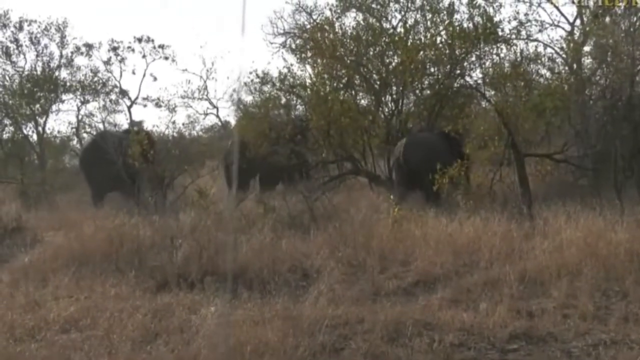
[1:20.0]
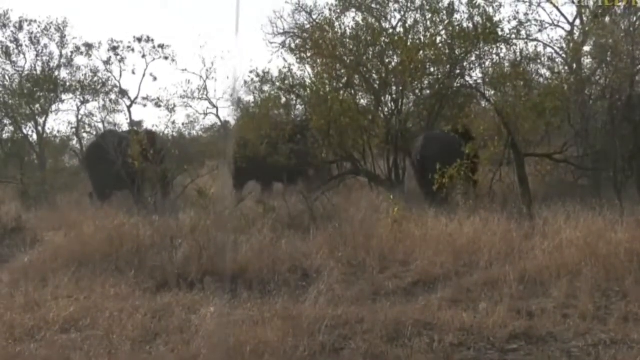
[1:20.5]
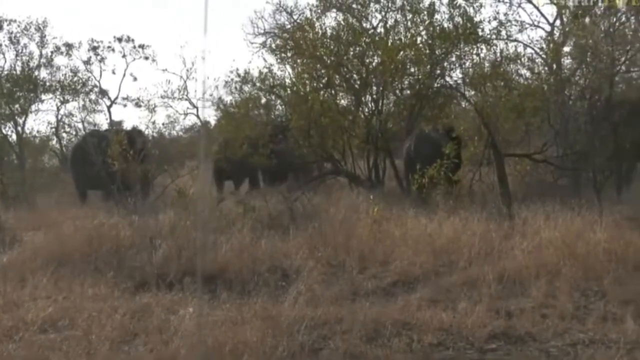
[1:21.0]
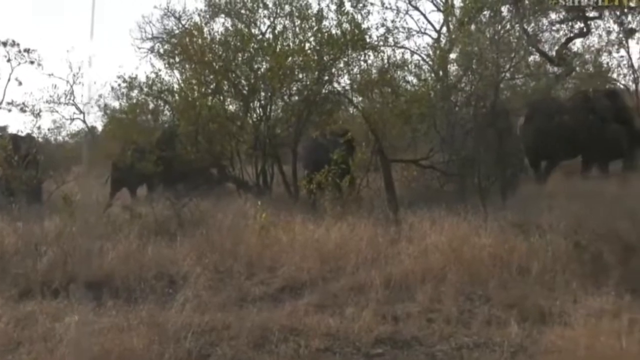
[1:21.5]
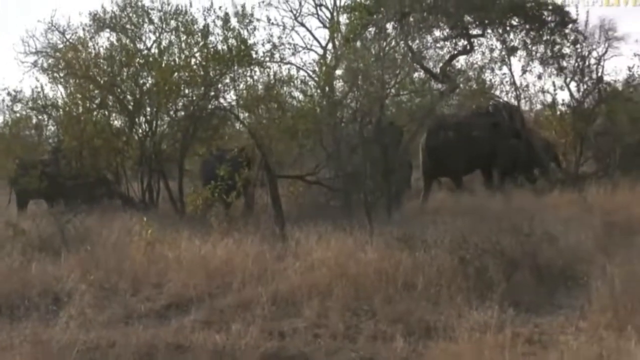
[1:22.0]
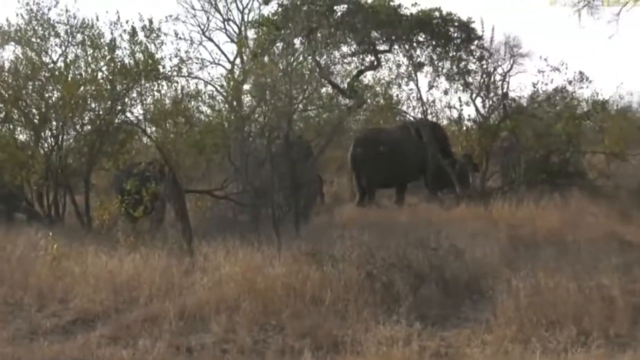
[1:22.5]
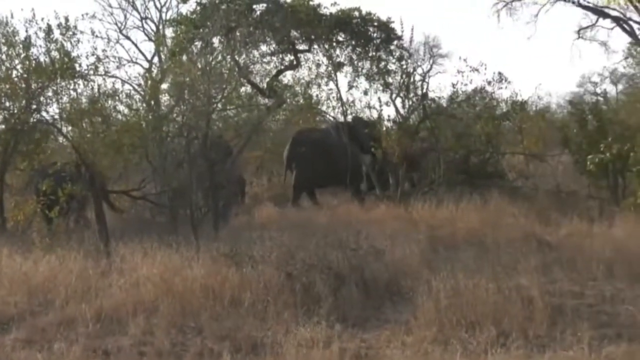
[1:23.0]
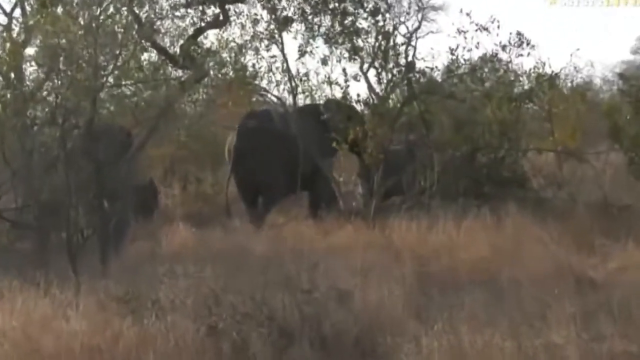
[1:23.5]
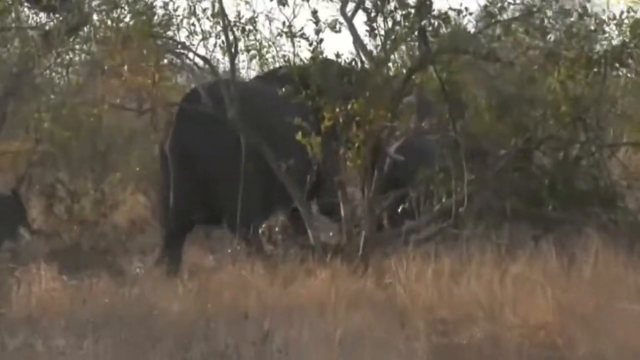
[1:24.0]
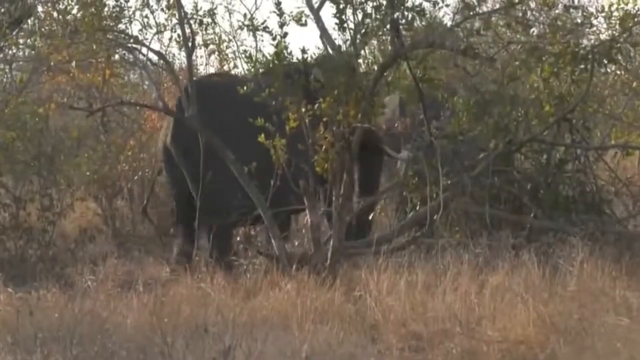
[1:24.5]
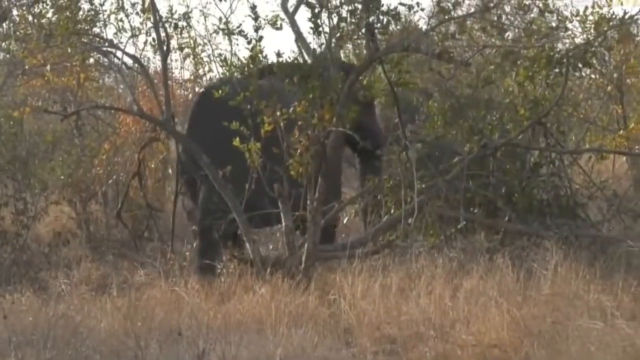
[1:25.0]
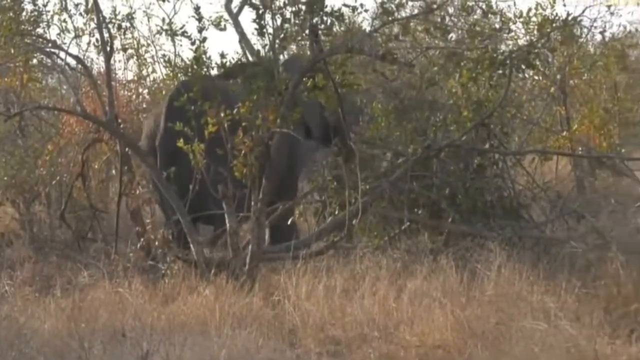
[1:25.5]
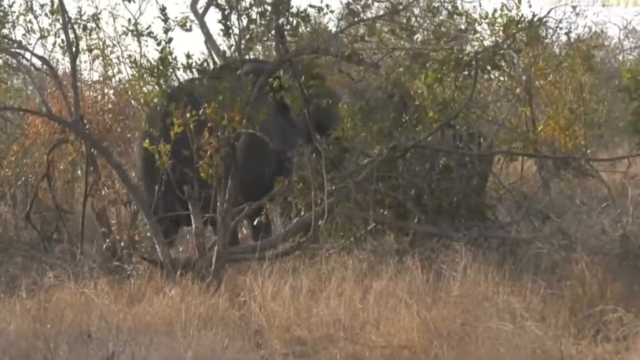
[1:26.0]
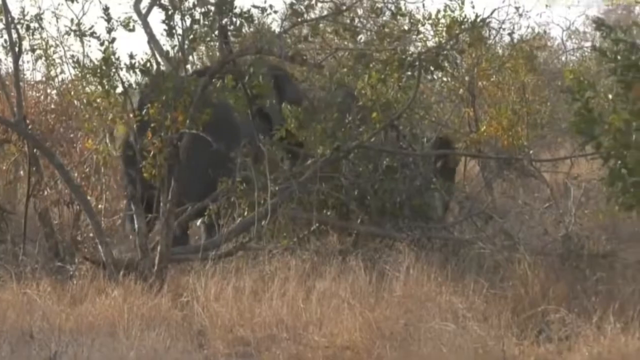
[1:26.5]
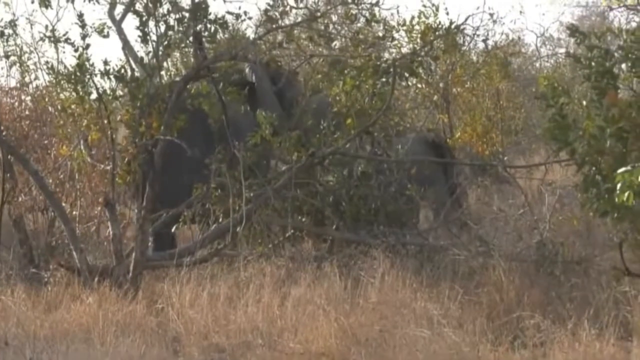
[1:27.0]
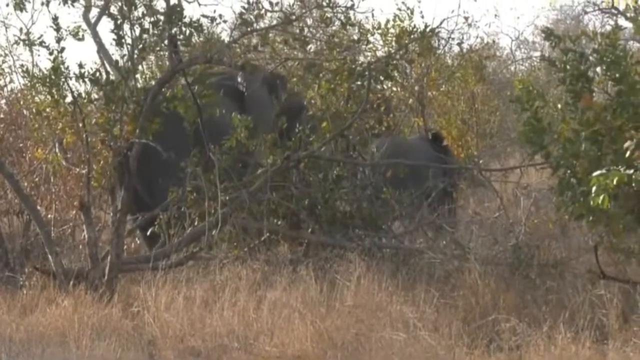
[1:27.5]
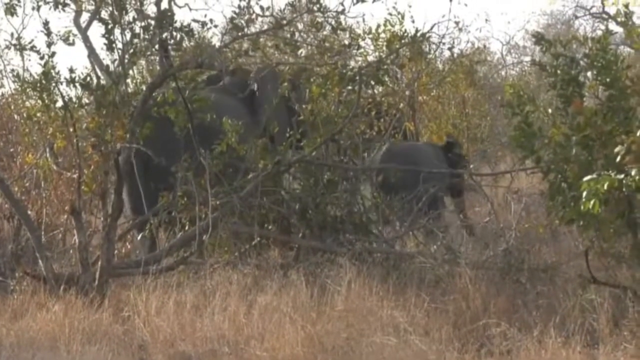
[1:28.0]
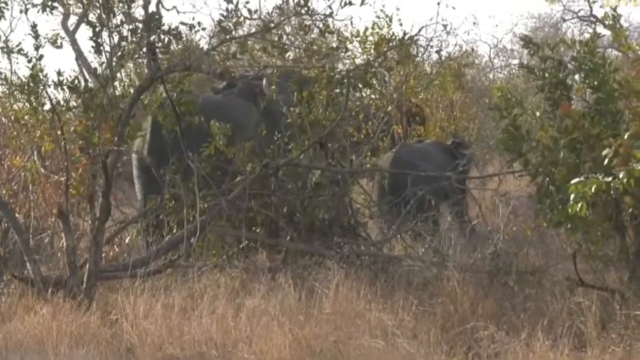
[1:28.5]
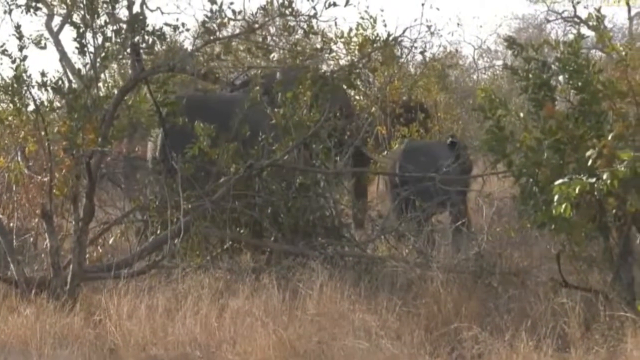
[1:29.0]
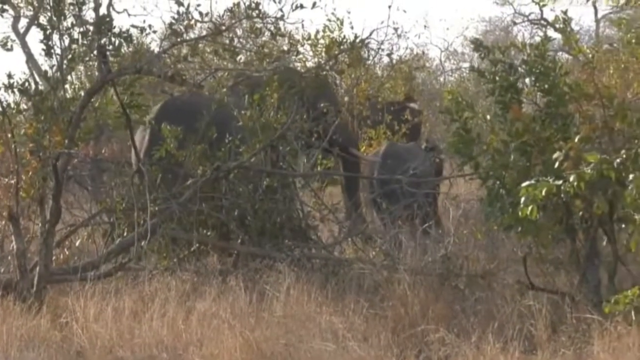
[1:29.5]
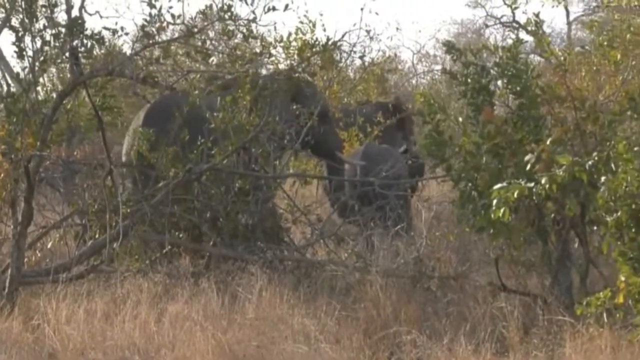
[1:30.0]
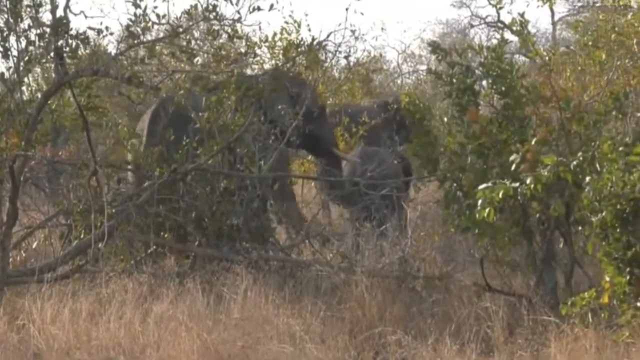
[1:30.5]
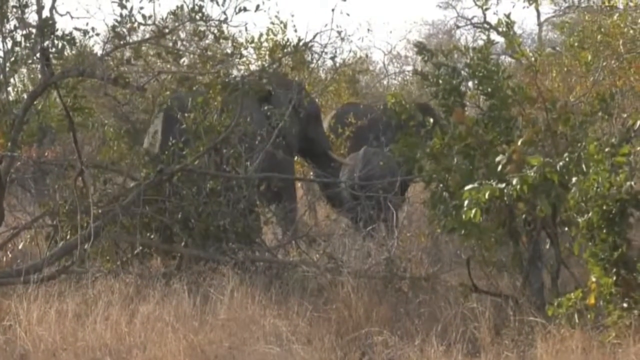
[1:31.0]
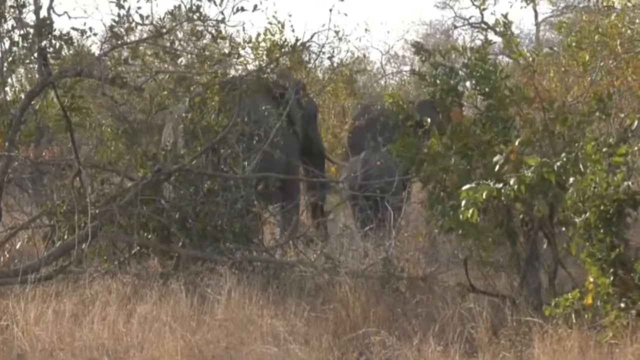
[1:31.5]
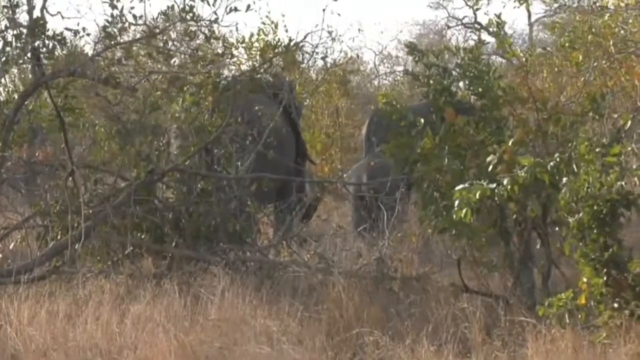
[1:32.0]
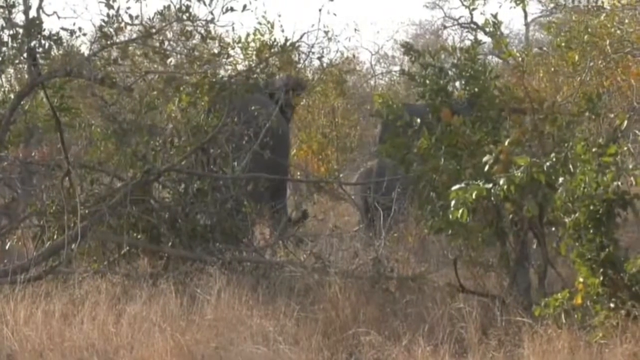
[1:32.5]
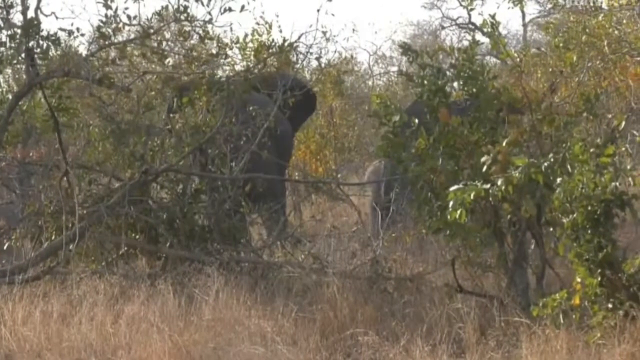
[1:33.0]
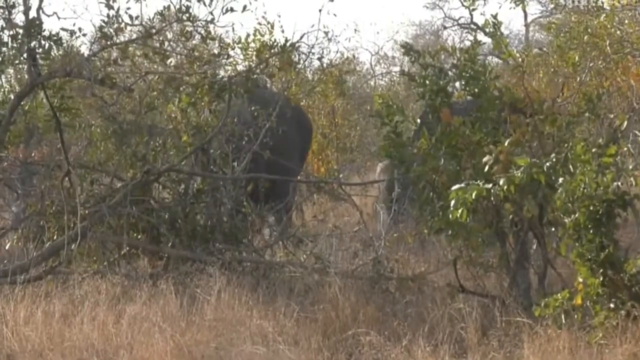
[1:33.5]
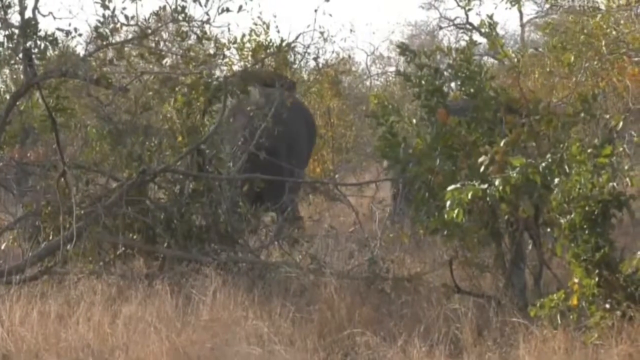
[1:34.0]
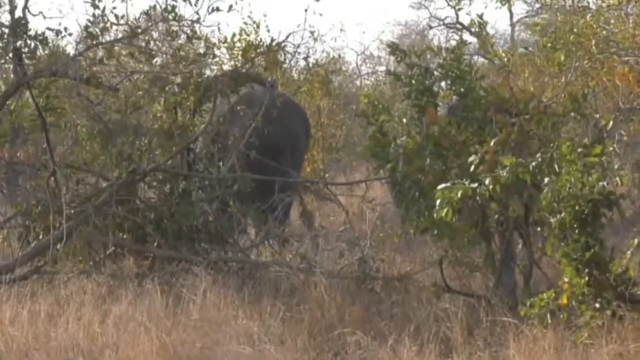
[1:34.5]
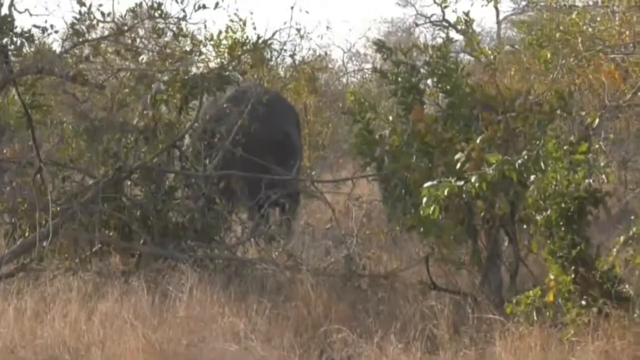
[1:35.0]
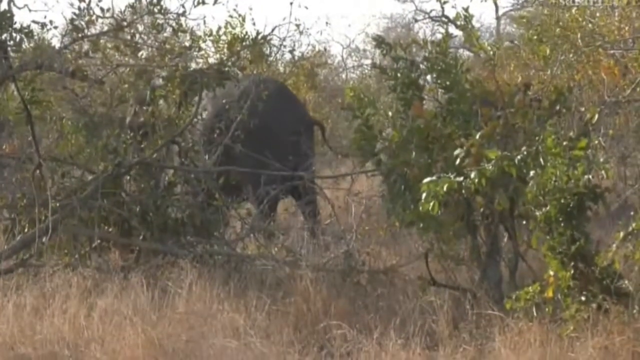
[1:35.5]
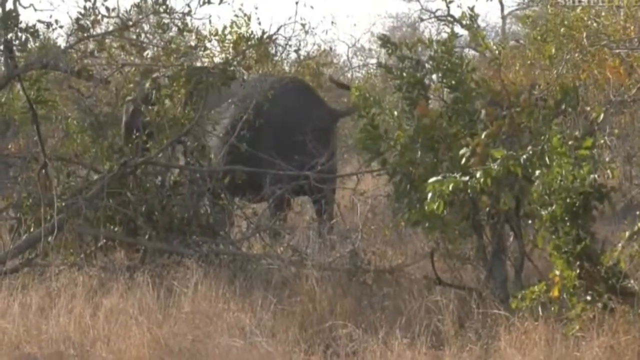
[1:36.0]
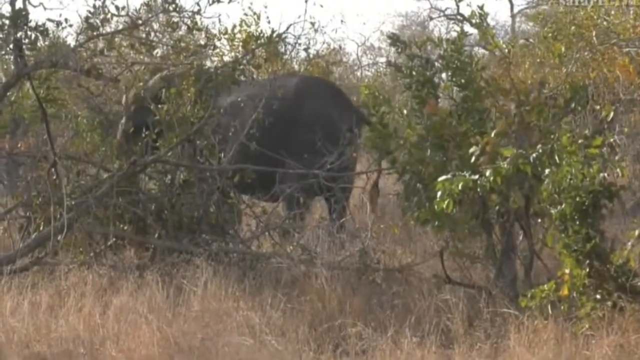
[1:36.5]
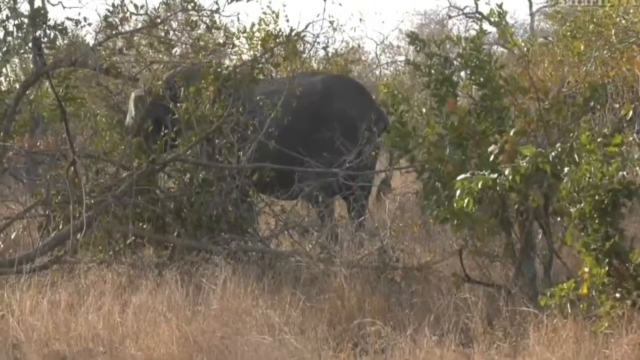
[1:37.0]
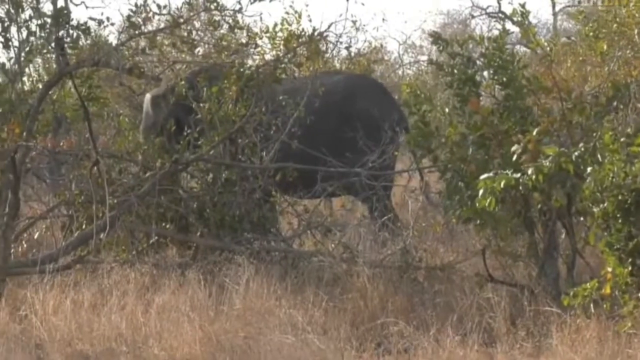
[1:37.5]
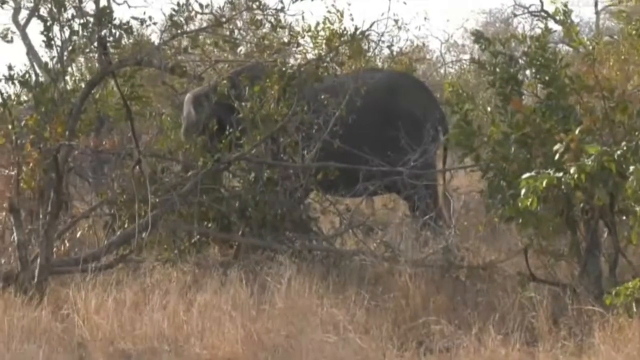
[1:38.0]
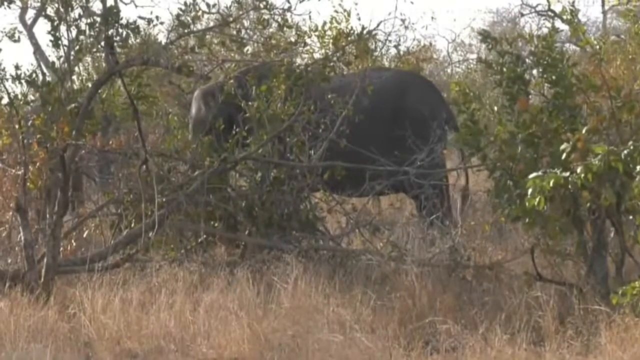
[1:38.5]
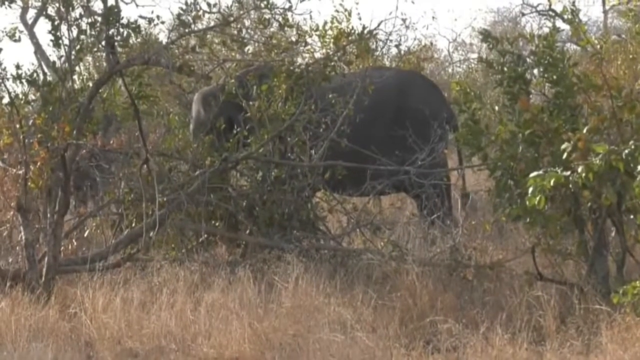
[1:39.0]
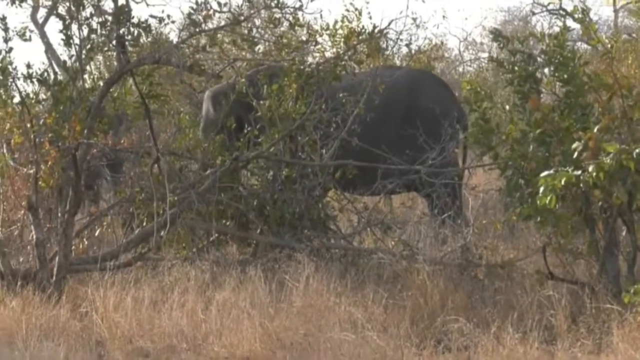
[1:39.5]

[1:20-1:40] The elephants slowly walk away through a brushy area with a lot of vegetation, and the camera keeps pace with them. The two large elephants stop to a degree and seem to inspect the area, possibly looking for something edible. The other elephants are with them, and the smaller ones move with a little haste to keep up with the larger ones. A large brush of vegetation is in front of the camera, looking like a small tree or something similar, with branches extended in front of the camera that have little to no leaves. The elephants stop at a spot and have found something.